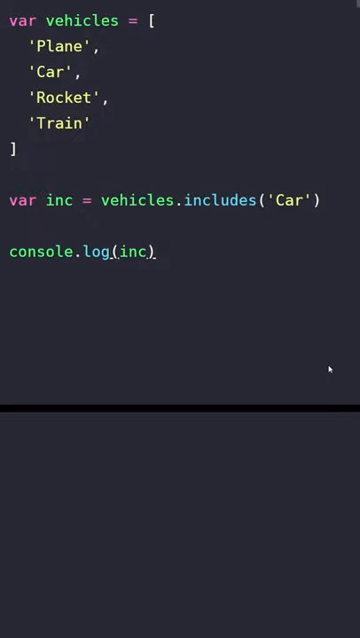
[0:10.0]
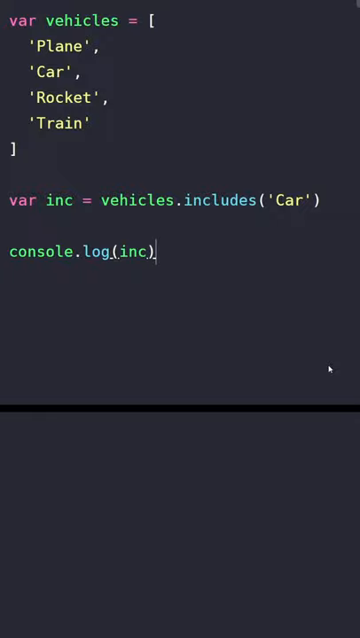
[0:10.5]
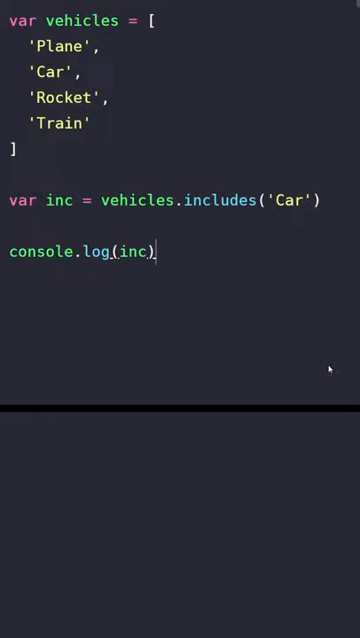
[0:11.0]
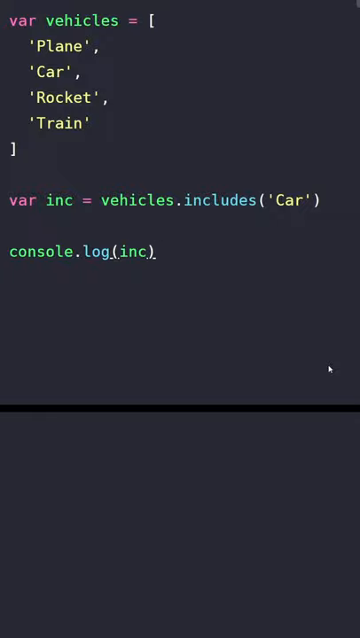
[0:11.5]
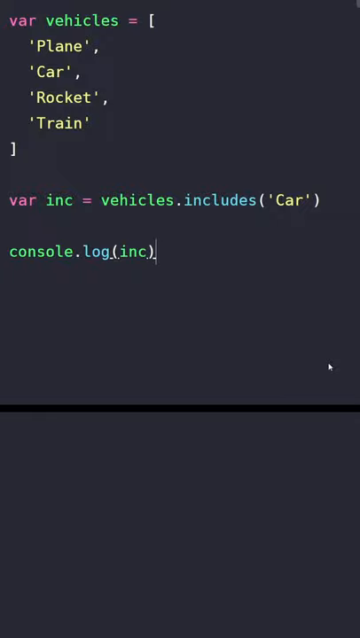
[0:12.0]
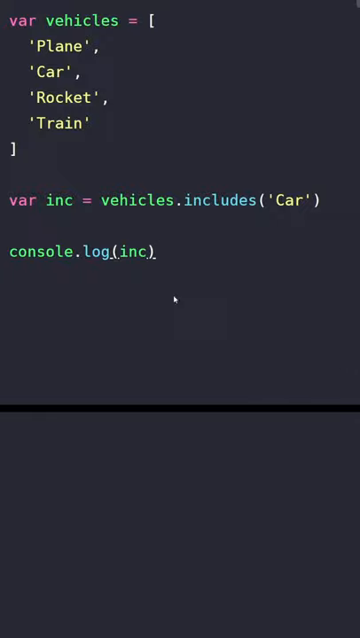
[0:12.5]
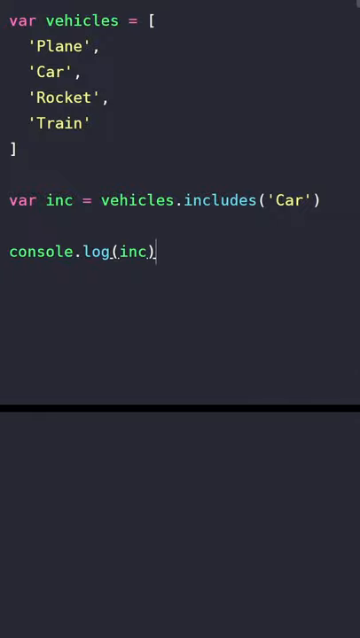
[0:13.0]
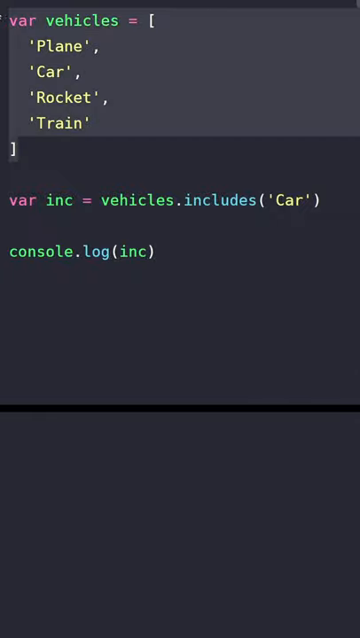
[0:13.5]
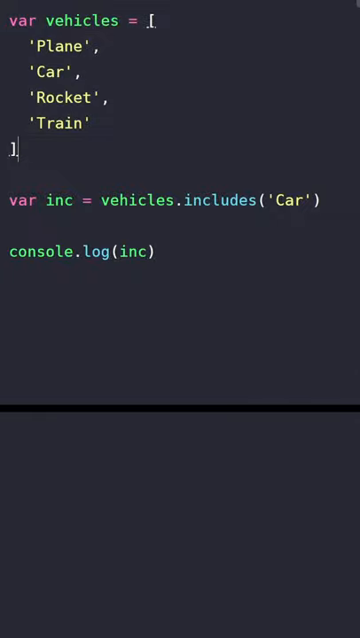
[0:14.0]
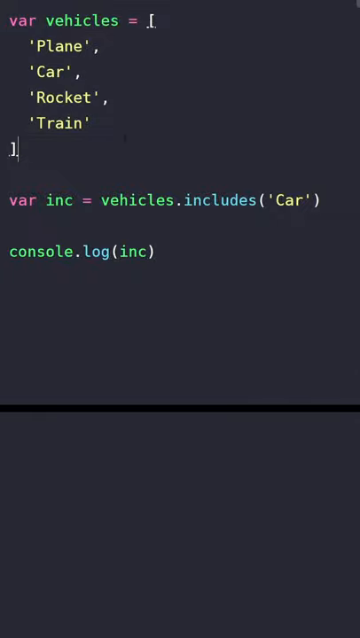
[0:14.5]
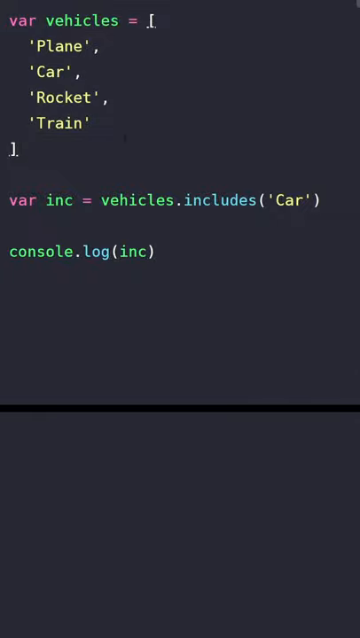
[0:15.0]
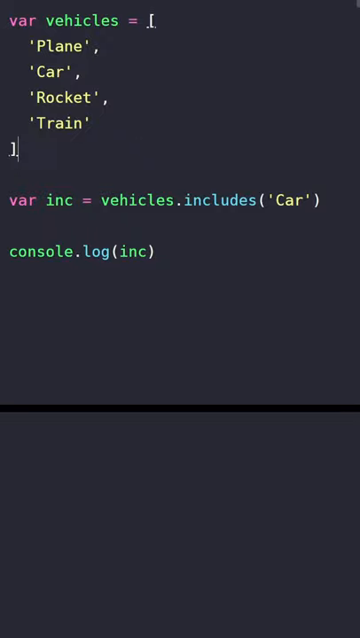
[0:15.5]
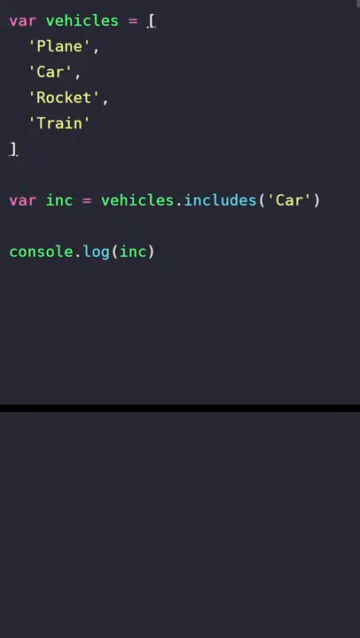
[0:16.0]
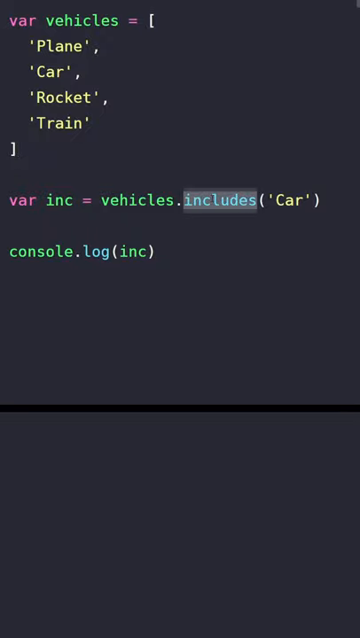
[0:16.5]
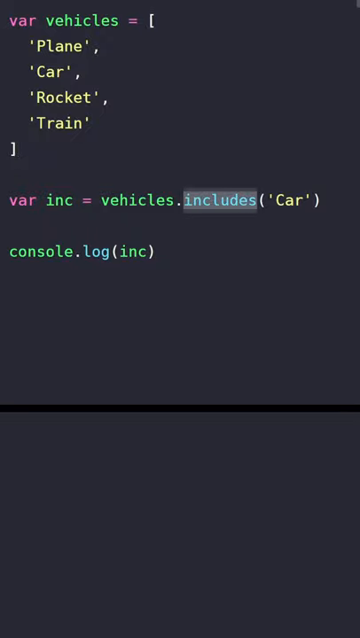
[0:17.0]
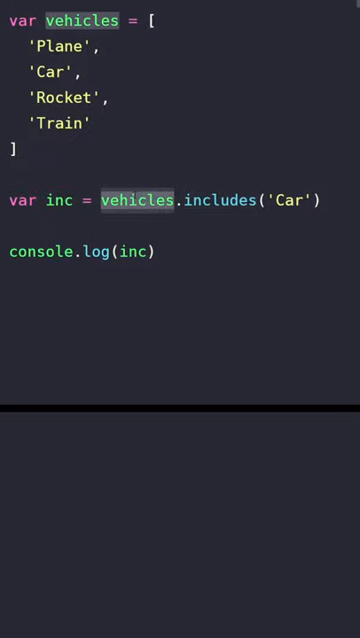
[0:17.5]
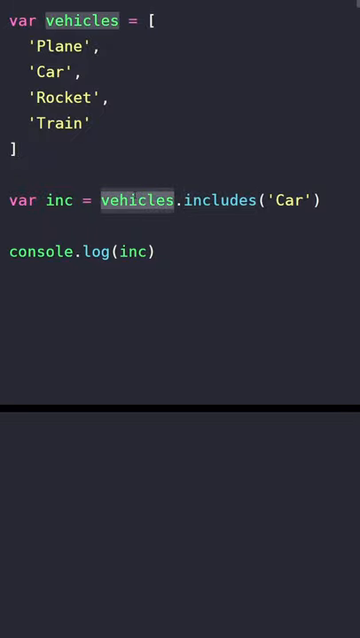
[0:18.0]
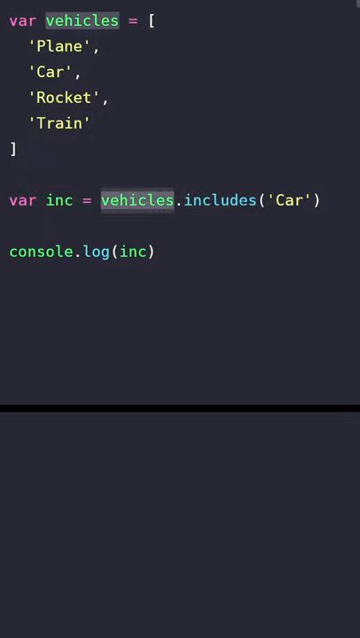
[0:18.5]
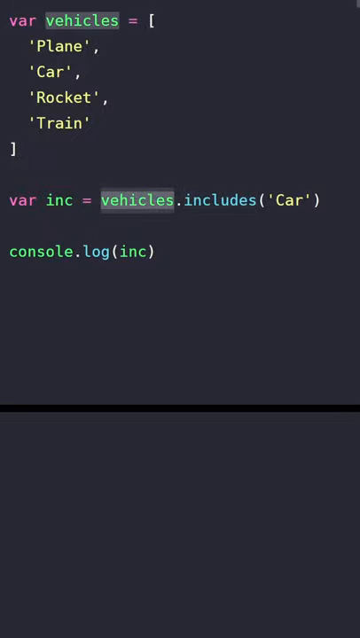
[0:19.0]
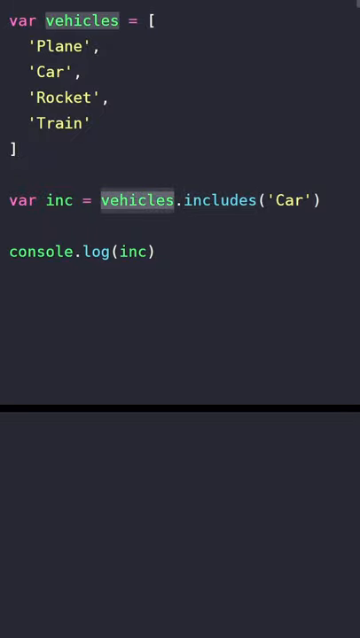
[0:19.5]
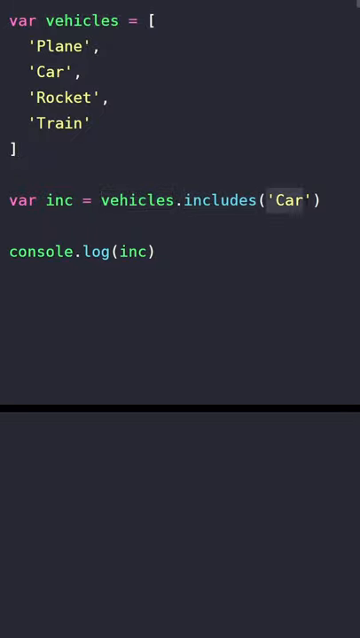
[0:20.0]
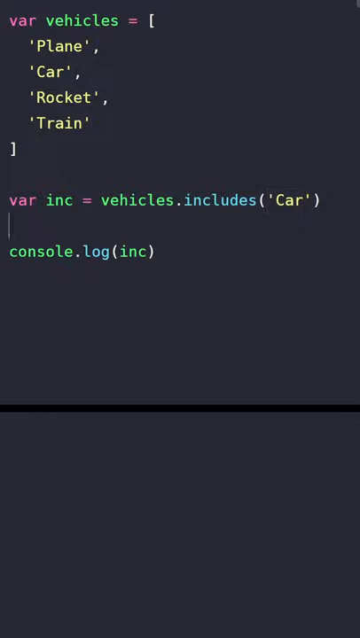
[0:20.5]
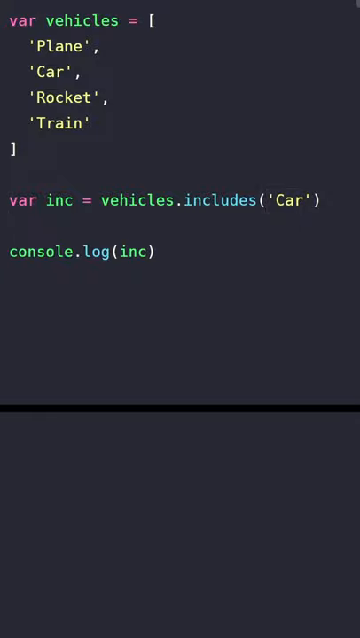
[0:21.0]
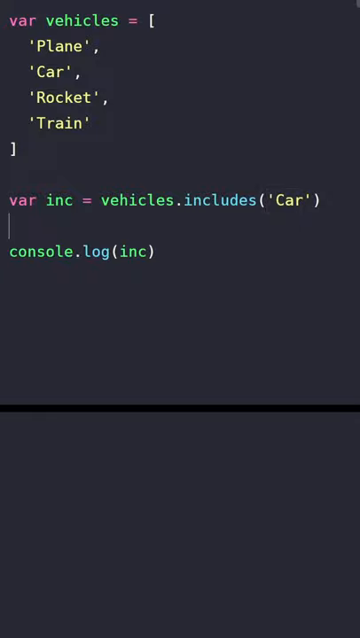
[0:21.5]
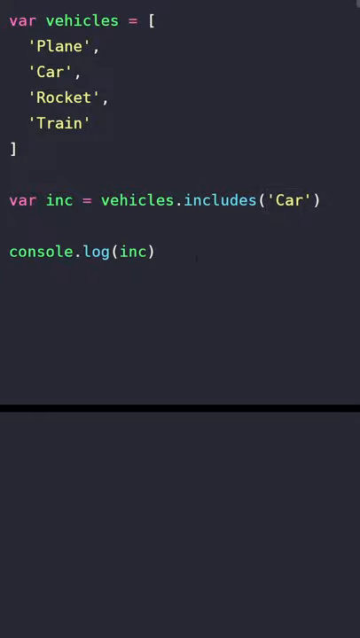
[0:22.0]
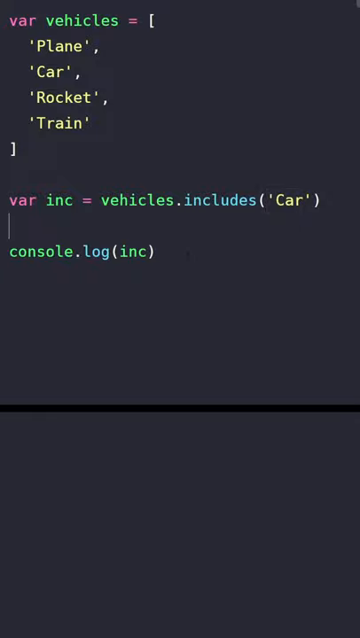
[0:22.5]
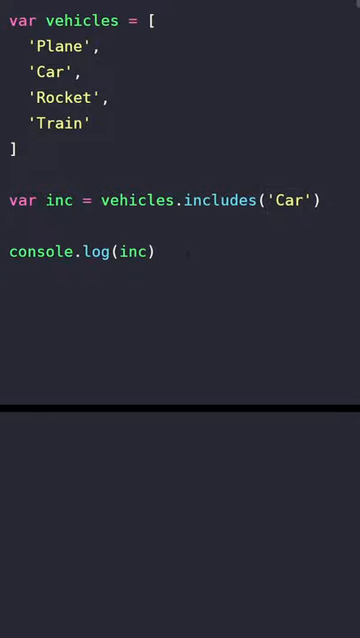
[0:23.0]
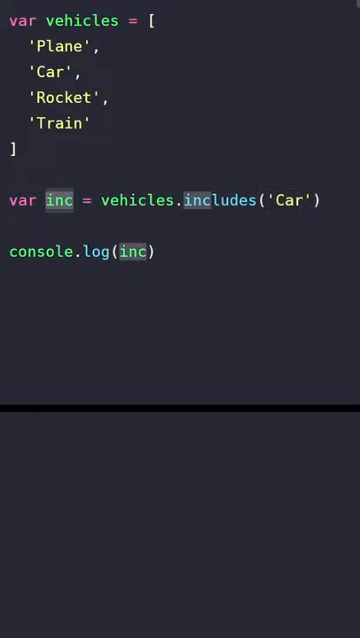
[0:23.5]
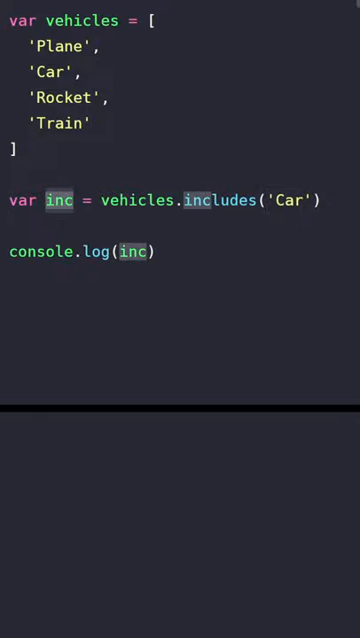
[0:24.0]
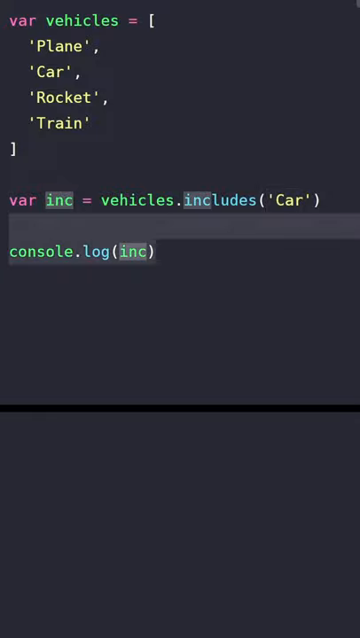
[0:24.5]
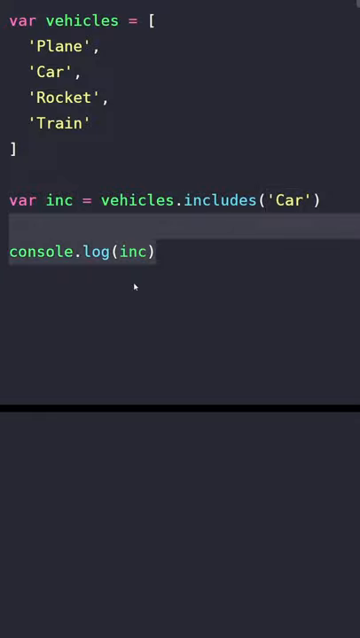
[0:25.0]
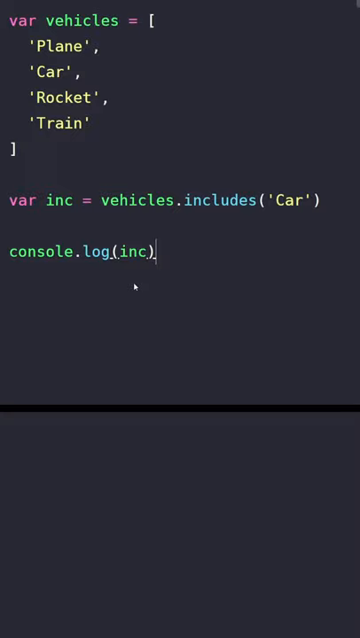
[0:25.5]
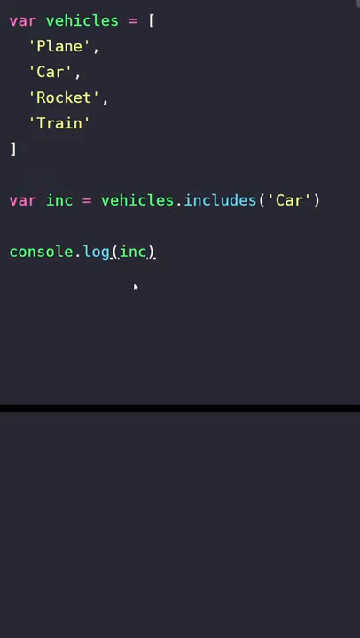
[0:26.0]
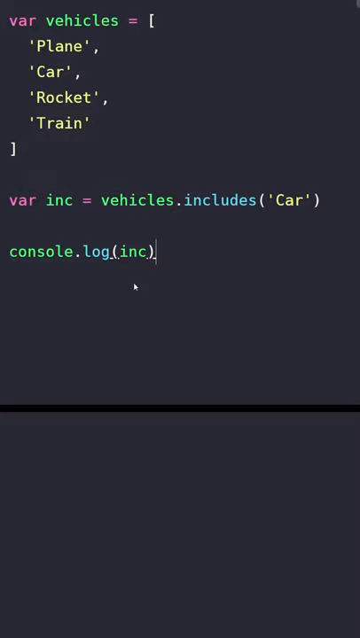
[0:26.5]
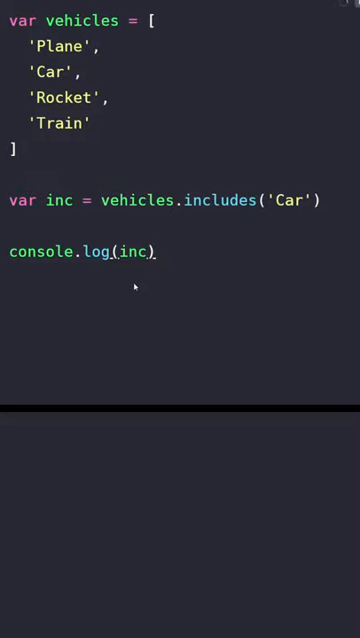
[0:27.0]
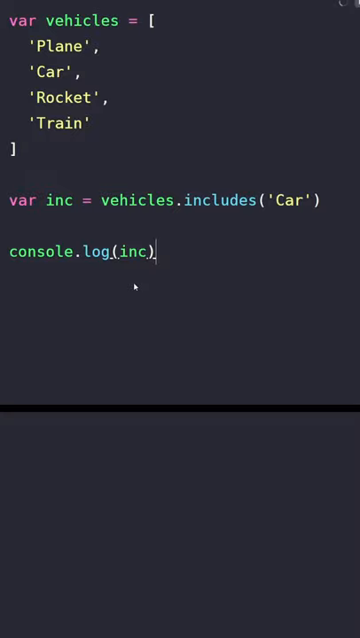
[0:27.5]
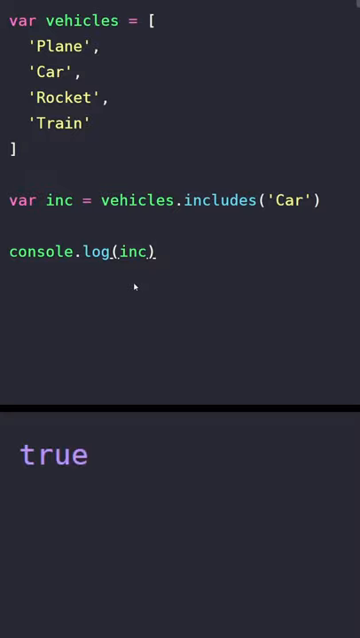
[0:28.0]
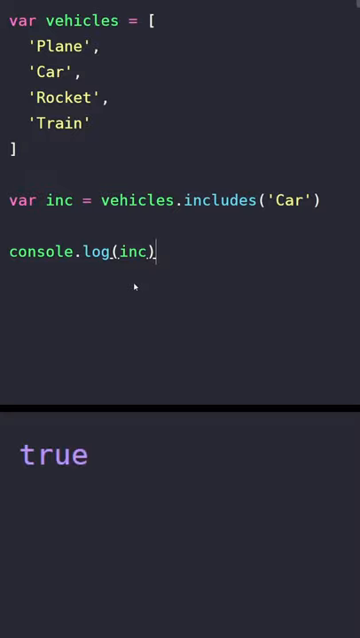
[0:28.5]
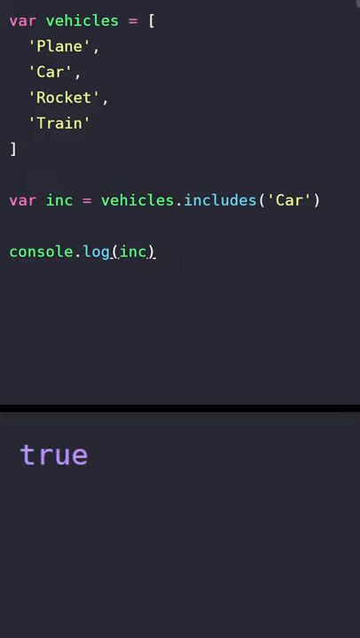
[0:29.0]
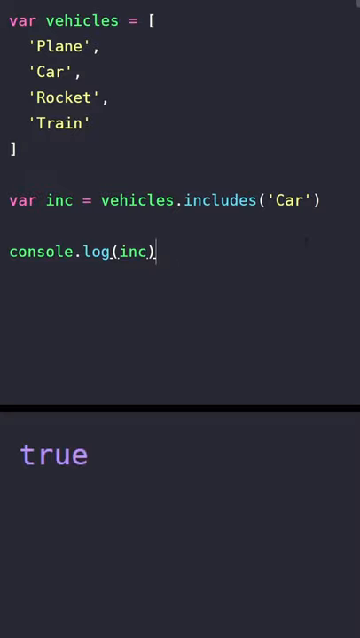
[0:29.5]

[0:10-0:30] The screen with code is shown, with code on the top screen and the bottom screen completely blank. The mouse highlights the top code, which reads var vehicles = bracket, plane, car, rocket, train and an end bracket; the highlighting does nothing. It is apparently unhighlighted, and another part underneath is highlighted instead: first var, then includes, which is in blue. He then highlights vehicles in the middle, which also highlights the first vehicles at the top. He briefly highlights car, then highlights inc, which highlights every place inc appears in the code. He clicks the cursor away, leaving the blinking text cursor at the very end of the code with the mouse just underneath. The bottom screen, which had no code, now says "true", apparently in a kind of purple color.